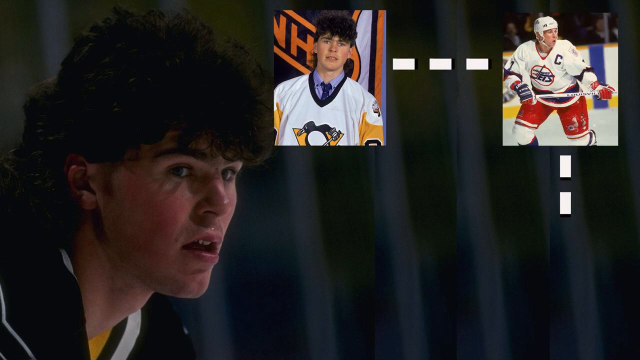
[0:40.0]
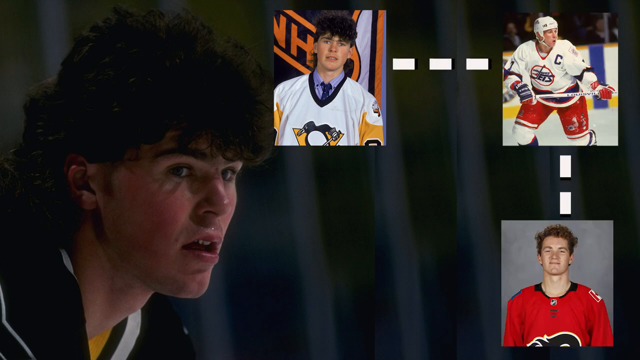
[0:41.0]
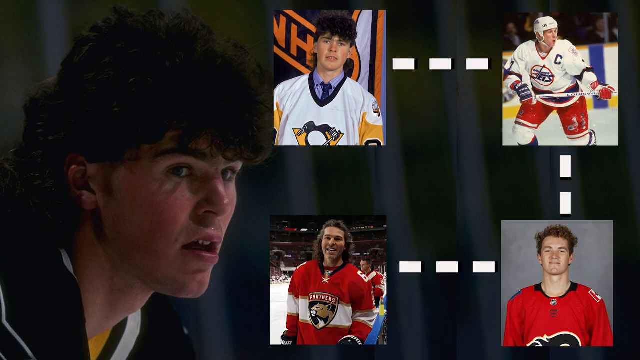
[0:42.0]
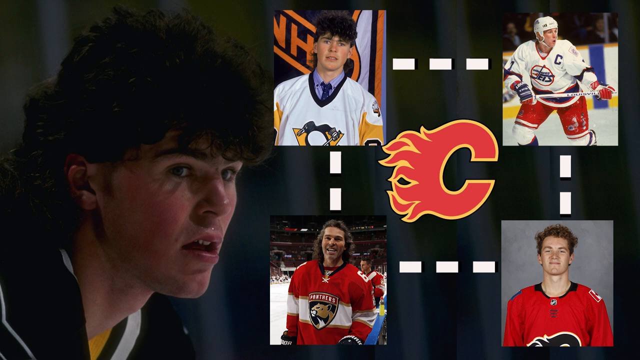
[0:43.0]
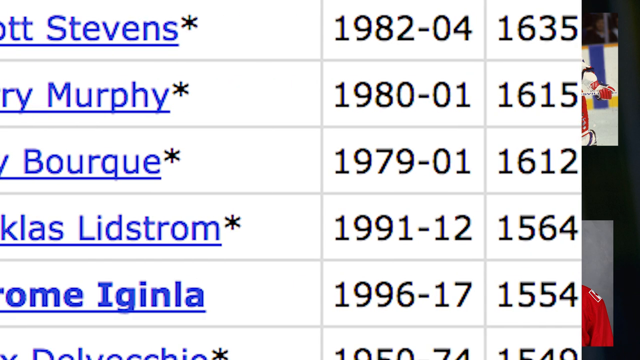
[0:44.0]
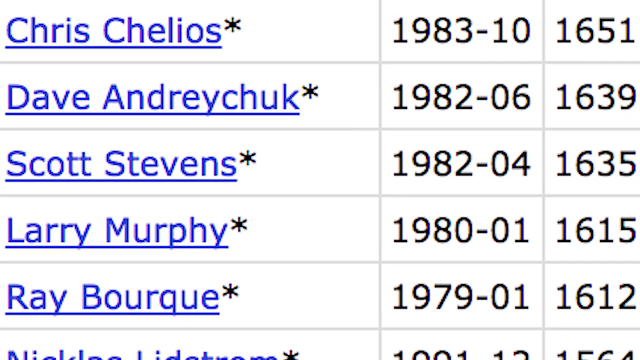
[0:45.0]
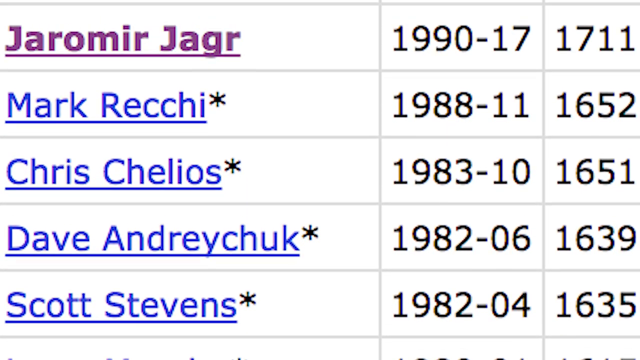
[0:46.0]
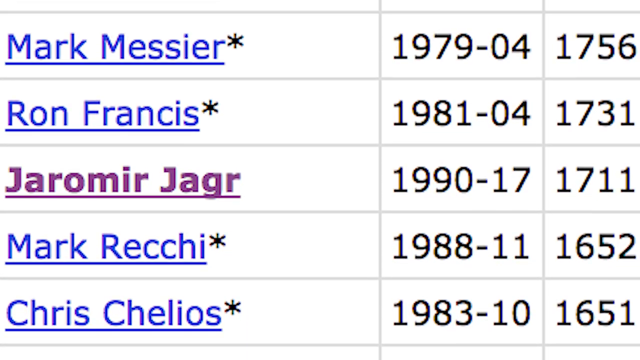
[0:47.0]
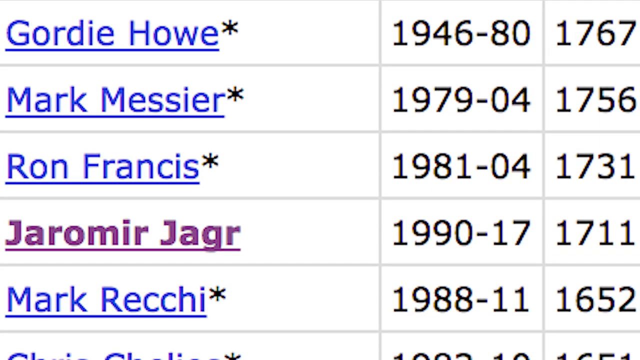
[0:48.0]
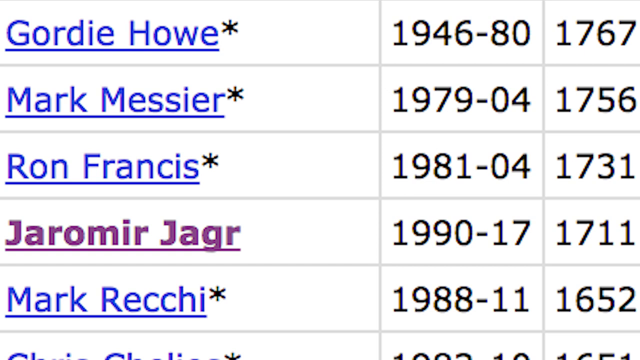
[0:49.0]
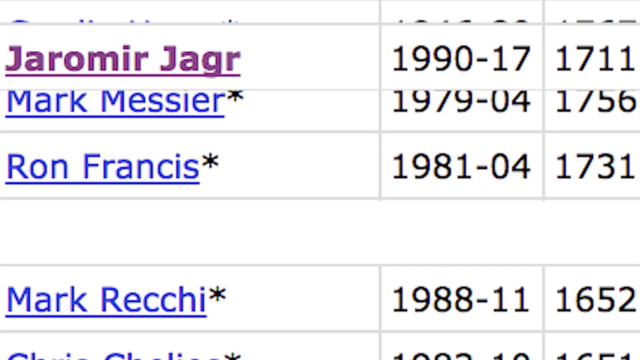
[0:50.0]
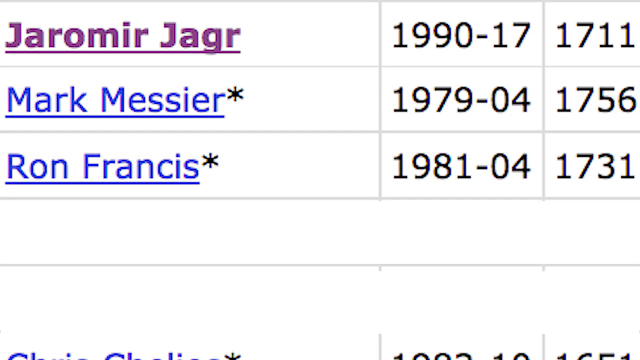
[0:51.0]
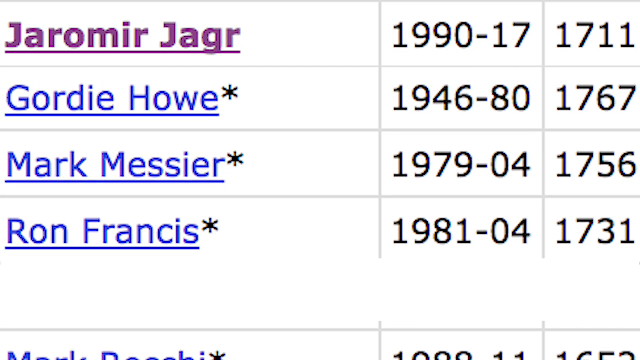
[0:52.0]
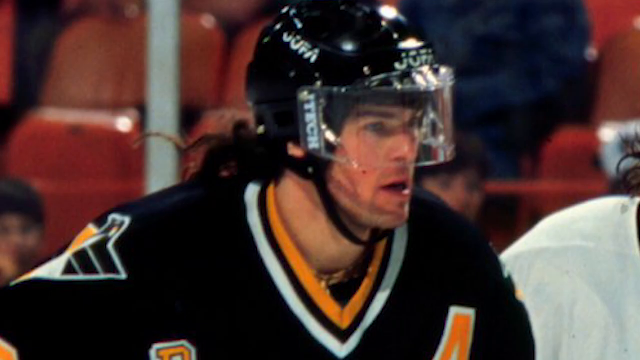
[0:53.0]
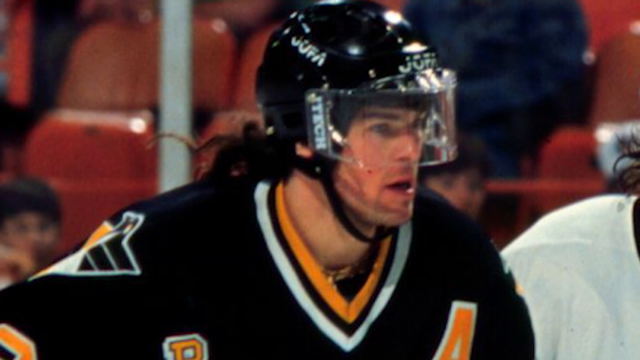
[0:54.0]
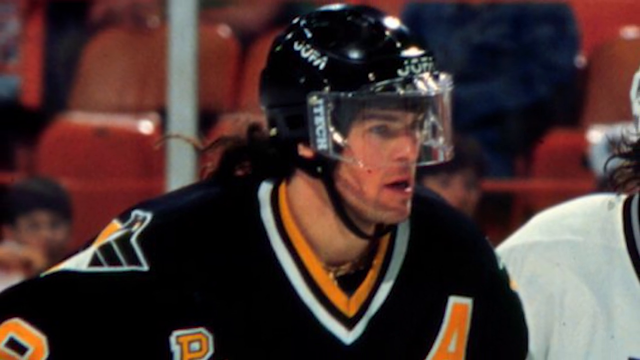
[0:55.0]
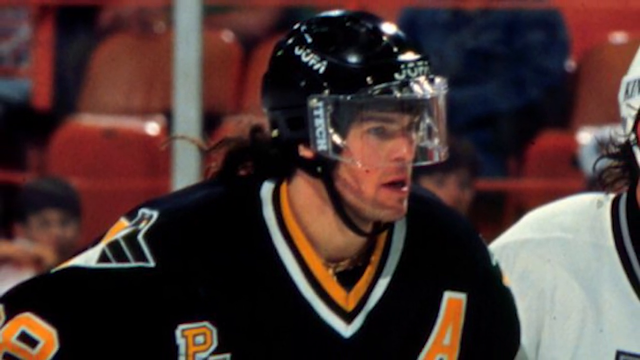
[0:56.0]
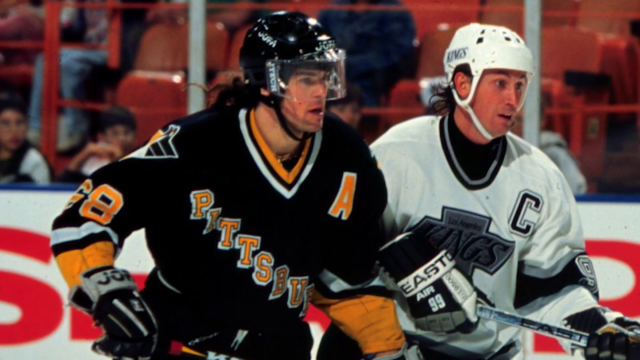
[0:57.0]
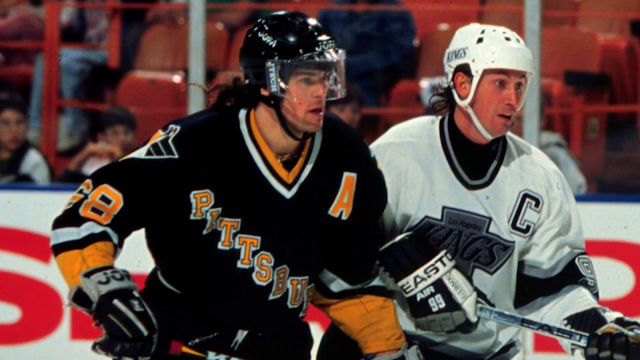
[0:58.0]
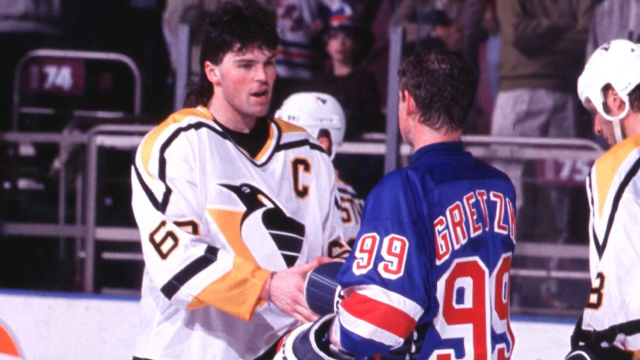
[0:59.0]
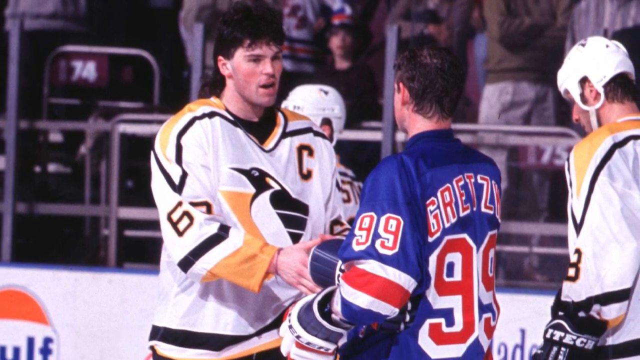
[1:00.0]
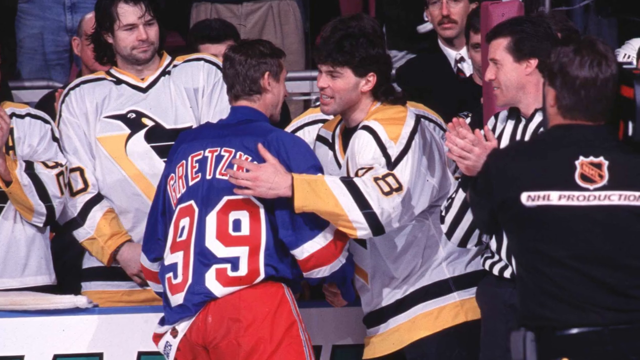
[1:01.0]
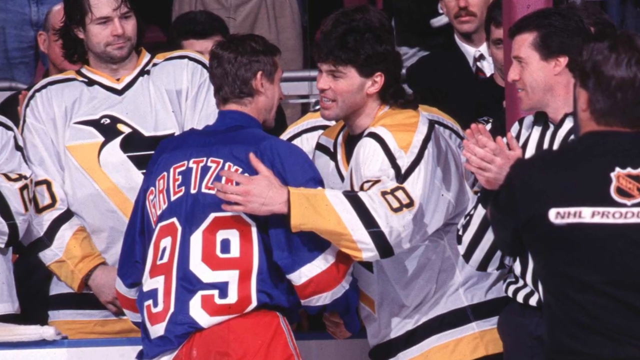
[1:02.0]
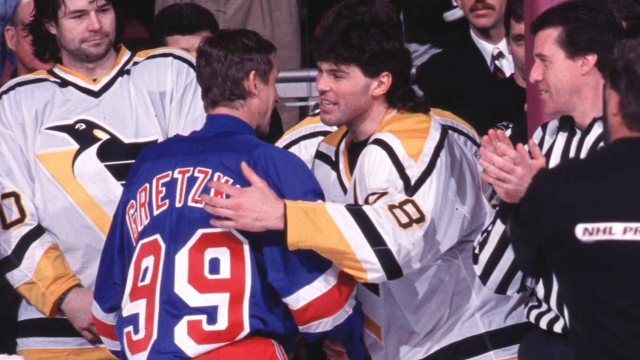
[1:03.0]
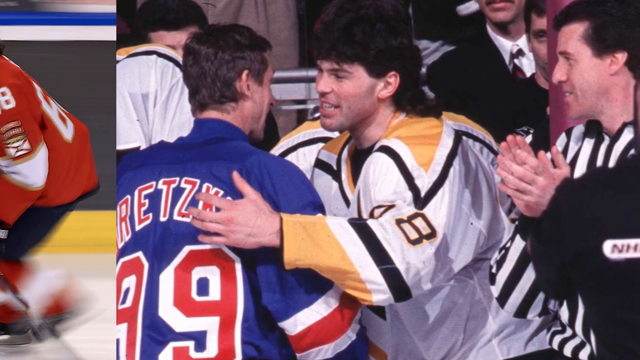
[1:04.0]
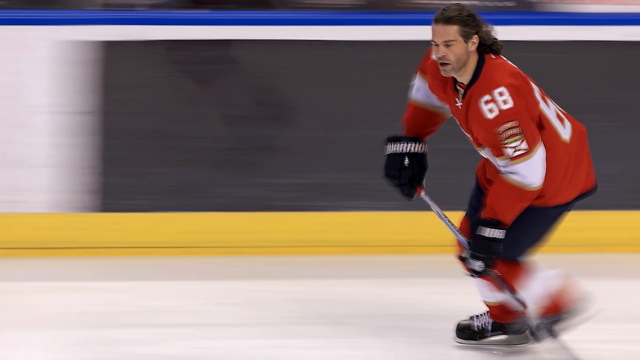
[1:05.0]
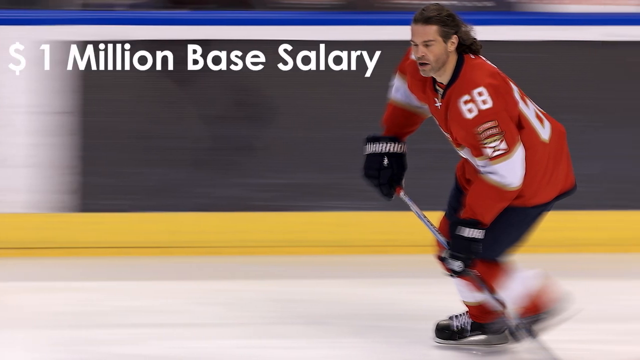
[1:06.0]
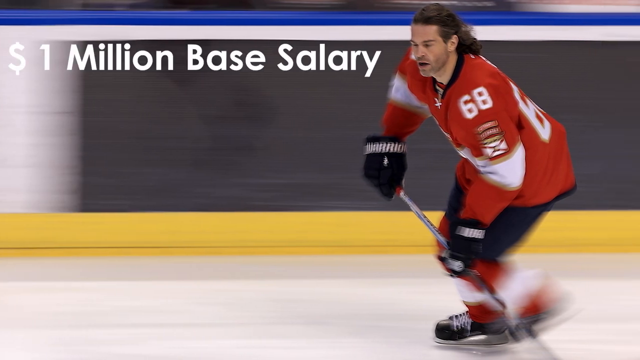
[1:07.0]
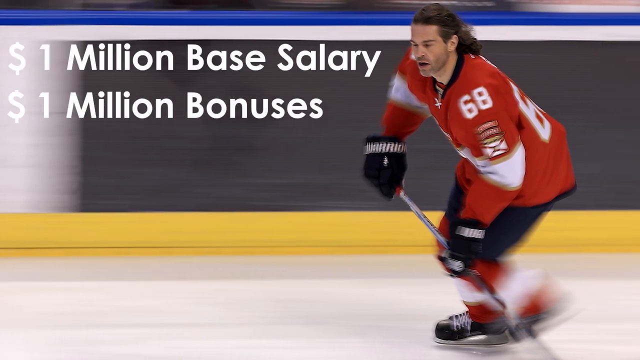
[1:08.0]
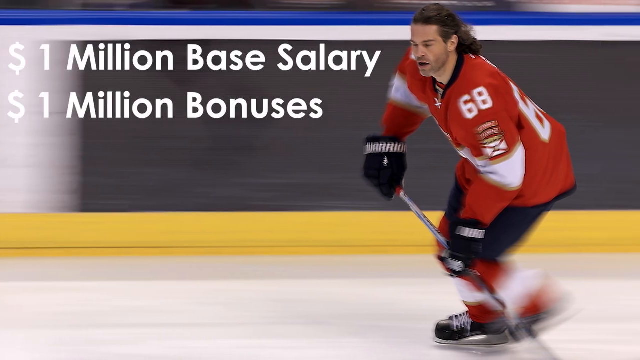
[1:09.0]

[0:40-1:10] Two more players are shown connected. Jeremy is shown climbing up the list and becoming the number one player. He then appears with another player, wearing a blue shirt, on the hockey field, showing good sportsmanship toward him, and then Jeremy is shown playing in a match. A head-to-head between those players follows, along with Jeremy climbing up the list and becoming the number one player from 1990 to 1991, from 17th.